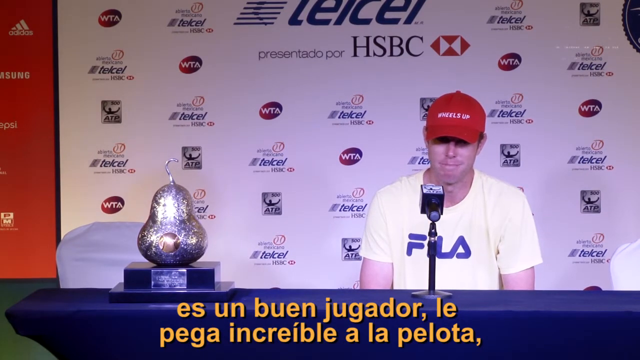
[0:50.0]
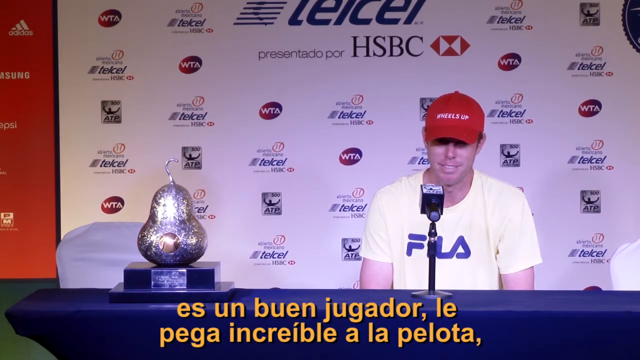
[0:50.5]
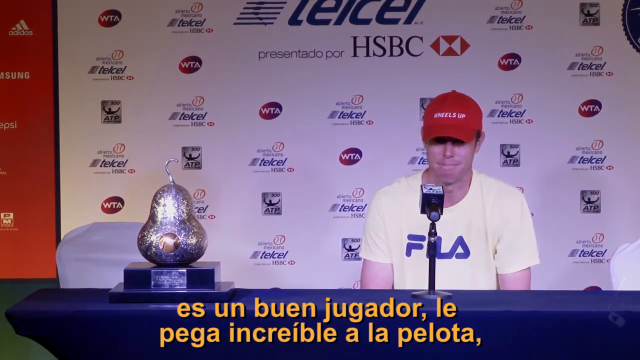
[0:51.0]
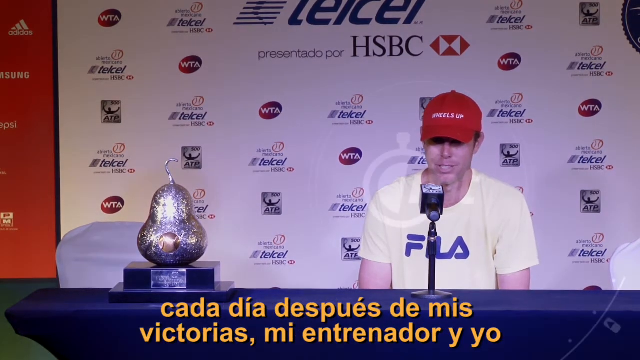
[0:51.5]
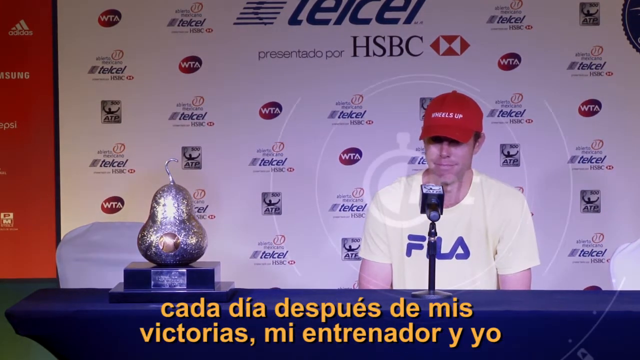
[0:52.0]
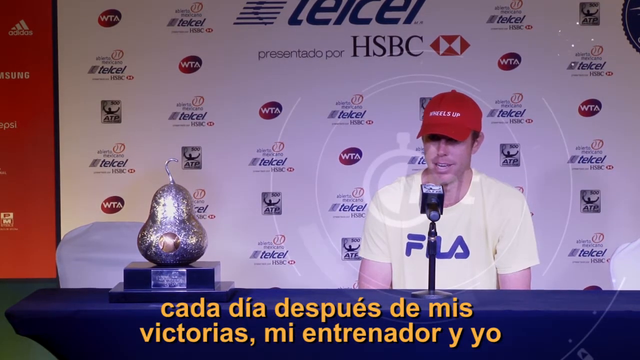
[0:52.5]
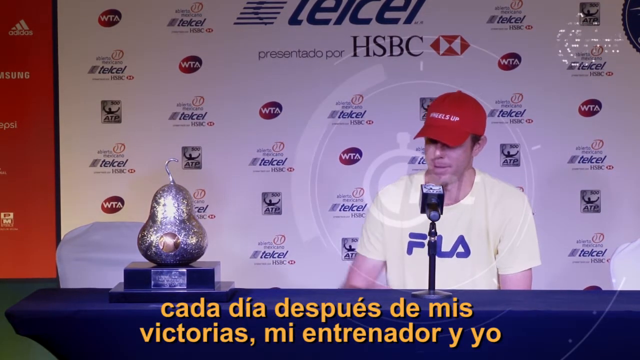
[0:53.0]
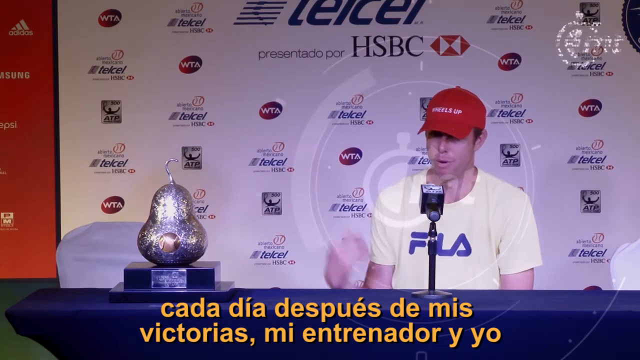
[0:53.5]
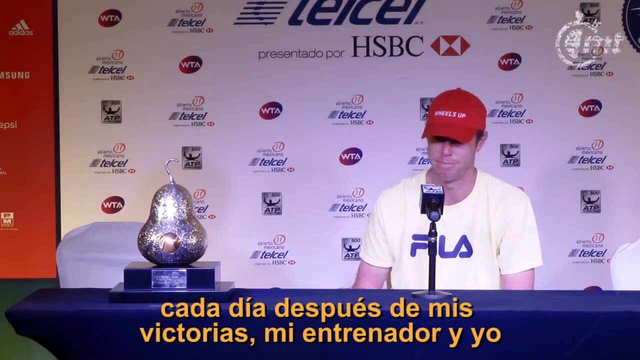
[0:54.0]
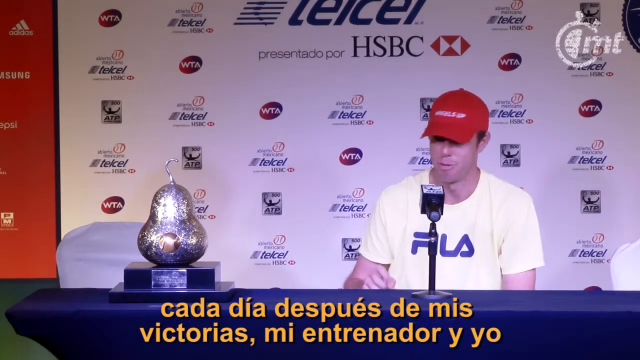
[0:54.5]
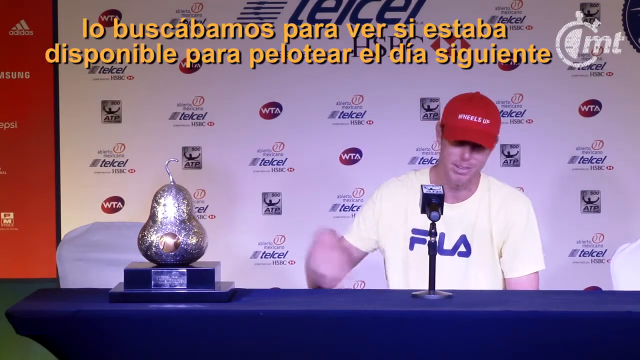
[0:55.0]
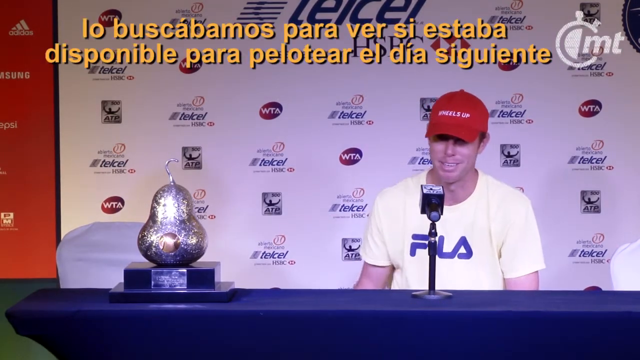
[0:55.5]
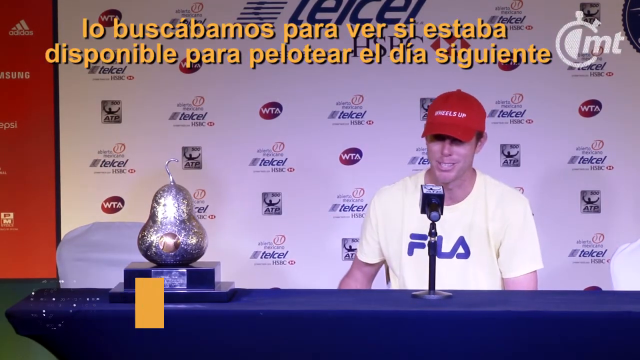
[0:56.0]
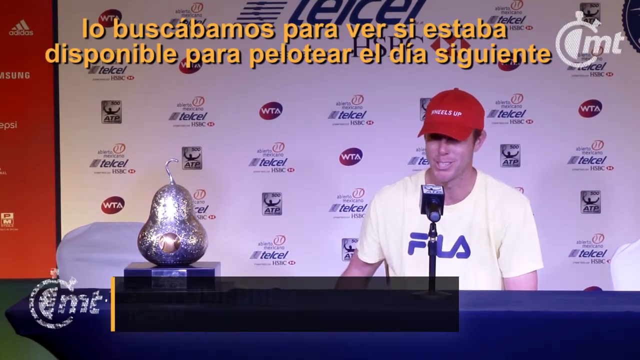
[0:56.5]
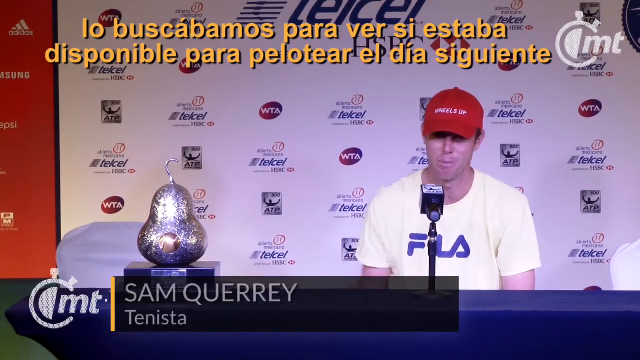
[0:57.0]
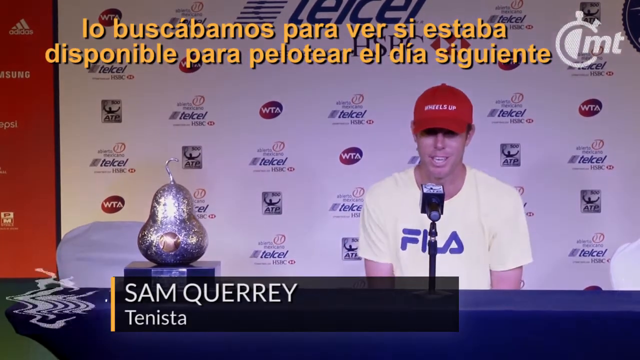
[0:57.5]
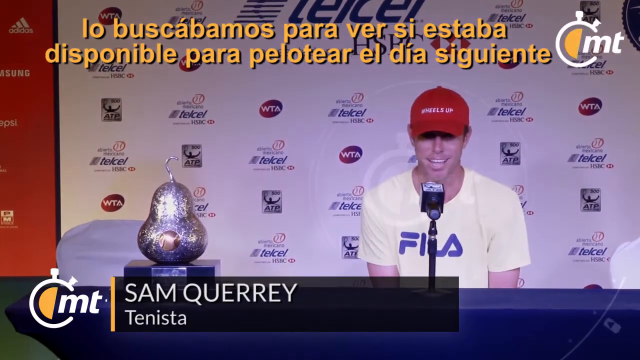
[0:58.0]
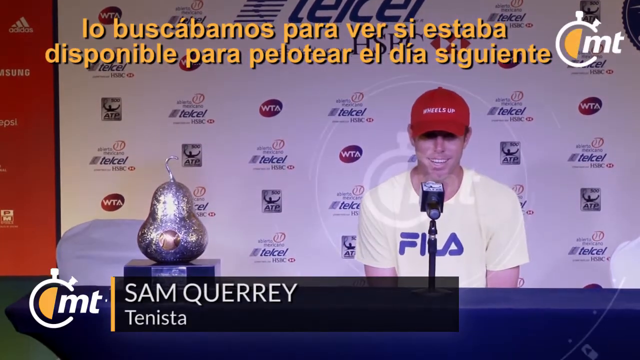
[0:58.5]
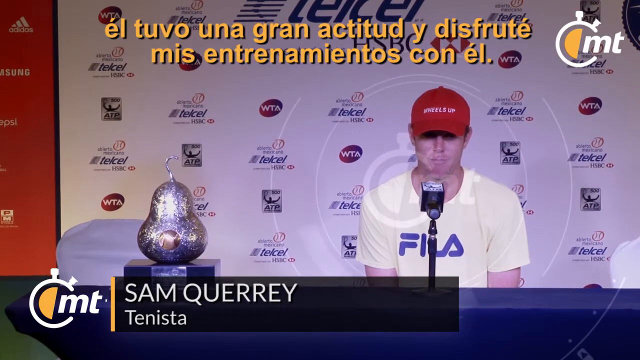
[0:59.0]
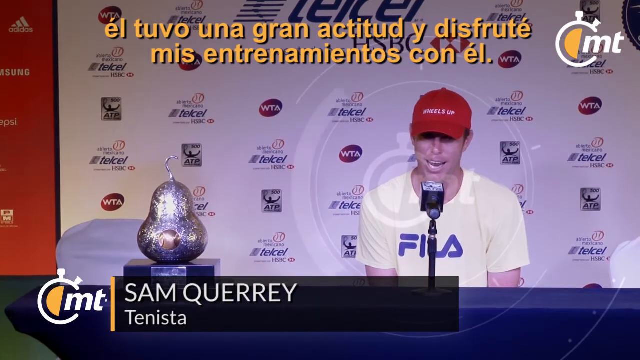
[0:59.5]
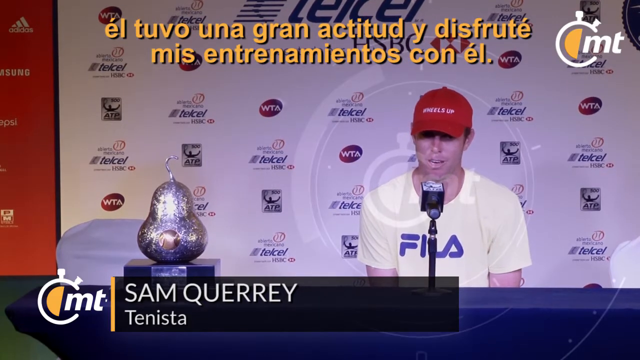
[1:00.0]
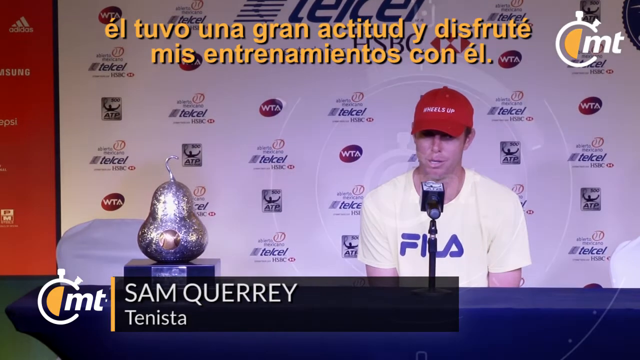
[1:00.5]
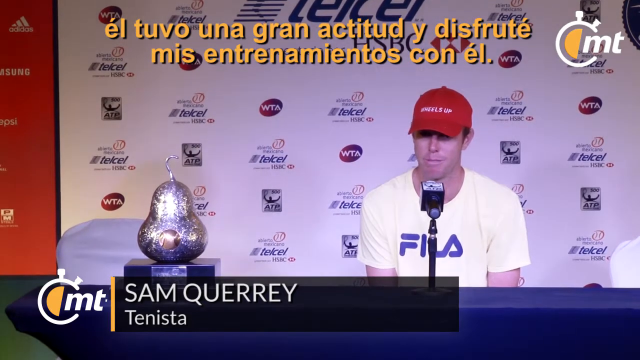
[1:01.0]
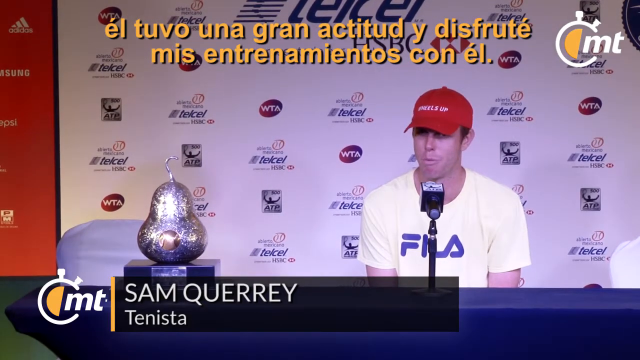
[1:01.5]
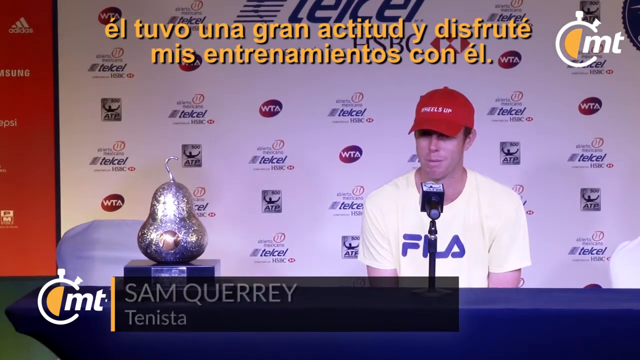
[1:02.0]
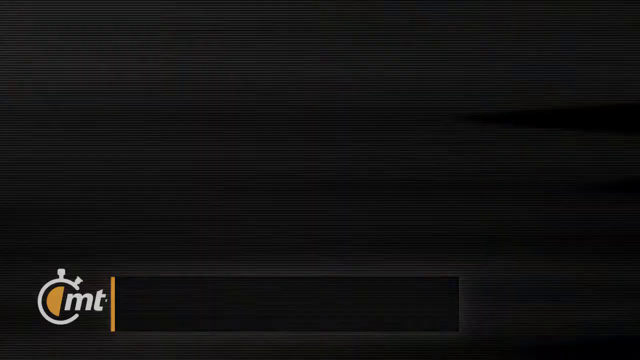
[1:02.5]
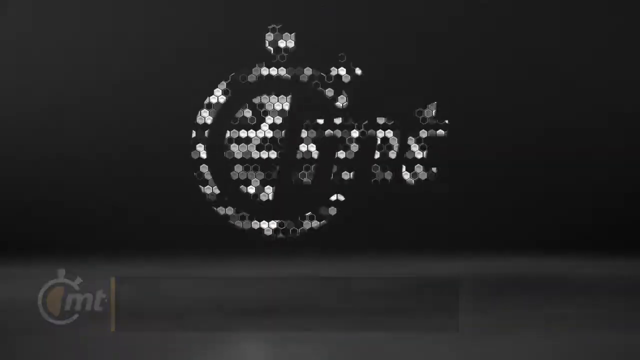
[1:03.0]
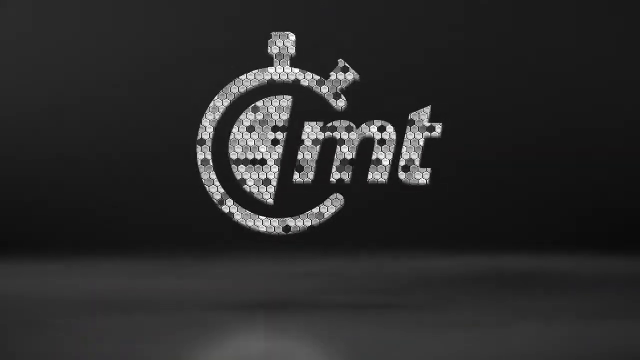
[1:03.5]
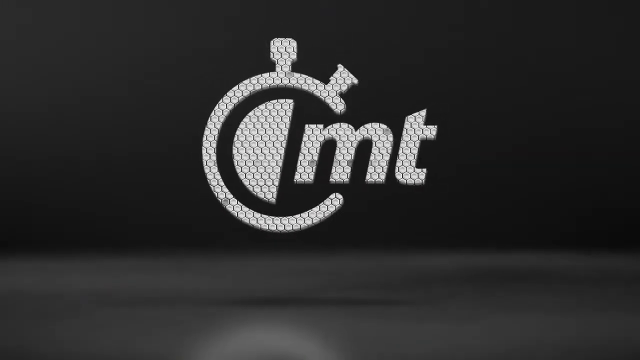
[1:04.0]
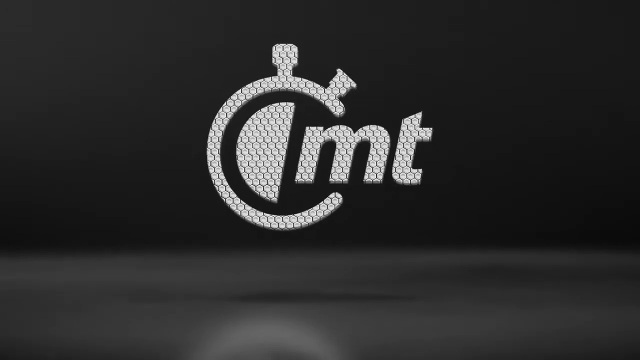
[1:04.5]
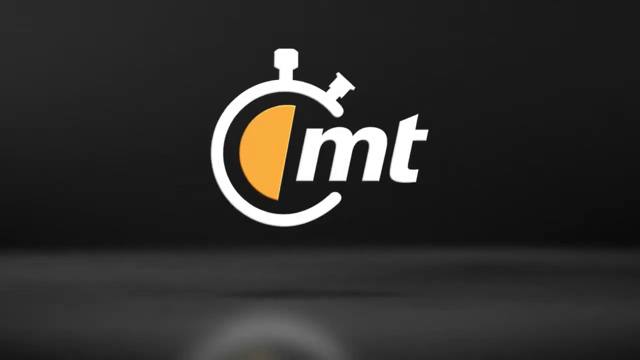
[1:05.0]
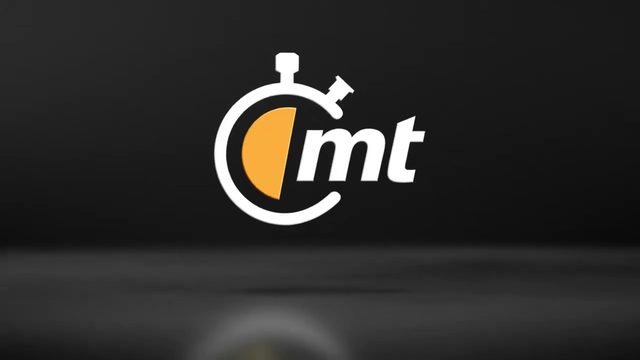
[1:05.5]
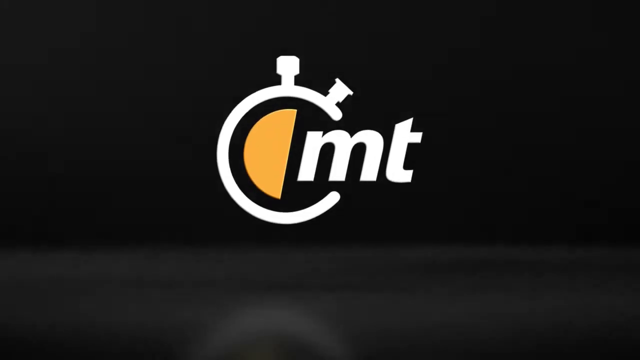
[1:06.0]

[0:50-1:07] The "CMT" watermark remains in the upper right-hand corner, its C looking like a stopwatch. Sam Querrey, the young man, is being interviewed at a press conference. Behind him is a wall of advertisements that includes "ATP" and "WTA", the professional tennis associations, and a microphone is in front of him. He looks to be in his early 20s, wearing a red hat that says "Wheels Up" and a white t-shirt with "Fila" on it in blue. He appears to be answering questions from the media. Orange closed-caption translation text in French is at the bottom.